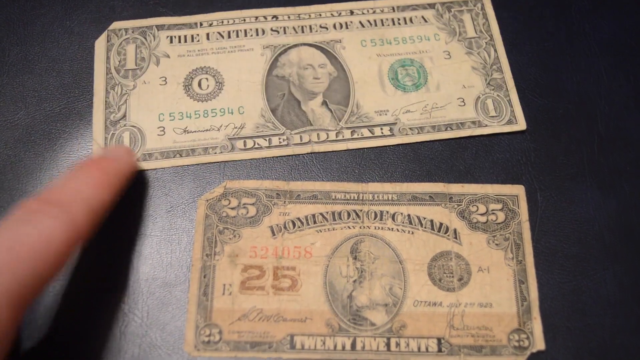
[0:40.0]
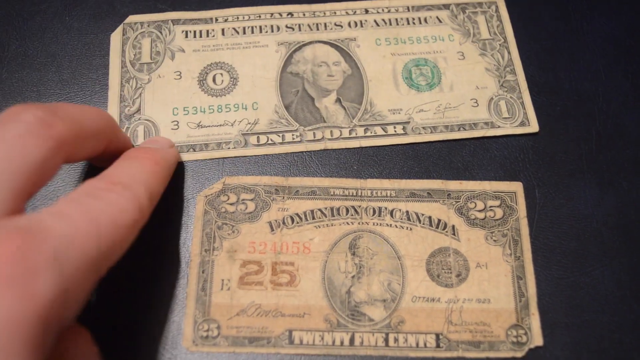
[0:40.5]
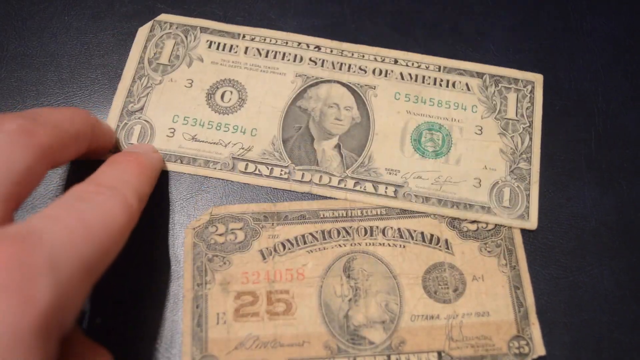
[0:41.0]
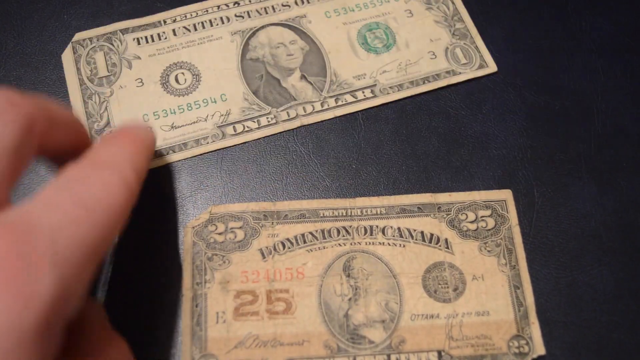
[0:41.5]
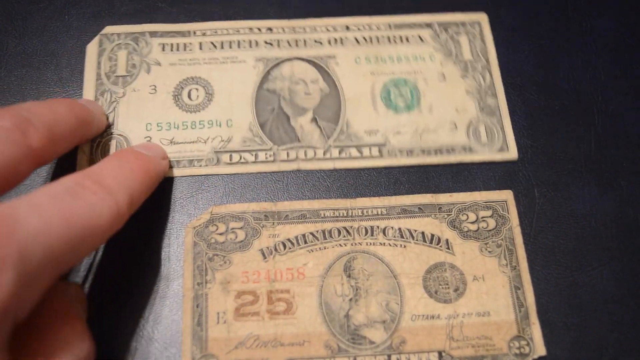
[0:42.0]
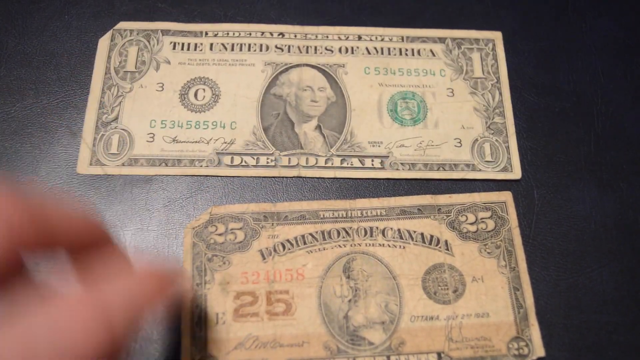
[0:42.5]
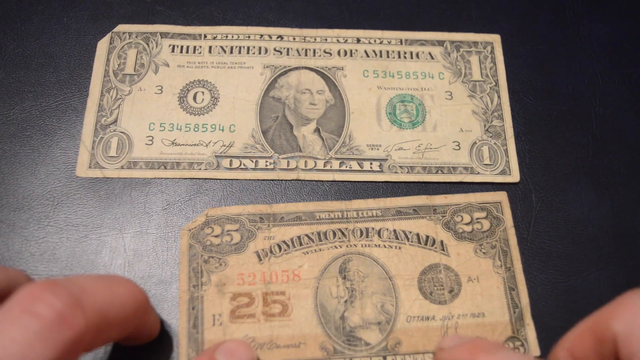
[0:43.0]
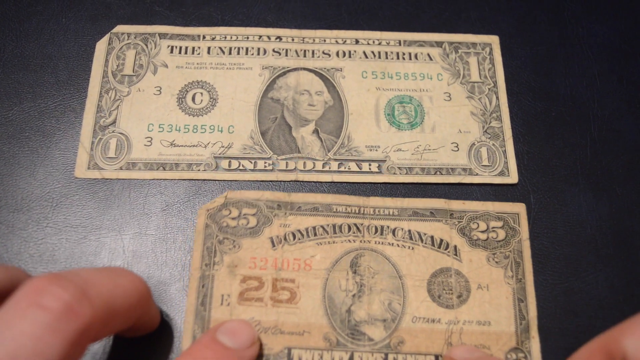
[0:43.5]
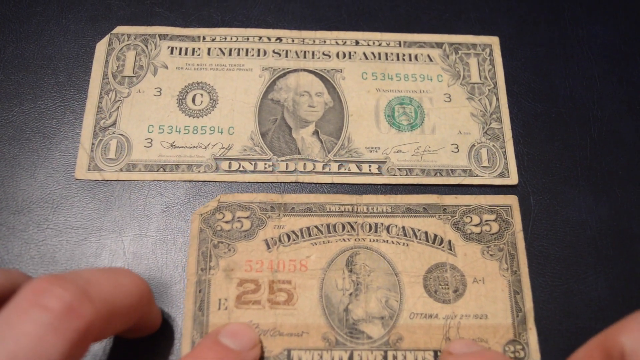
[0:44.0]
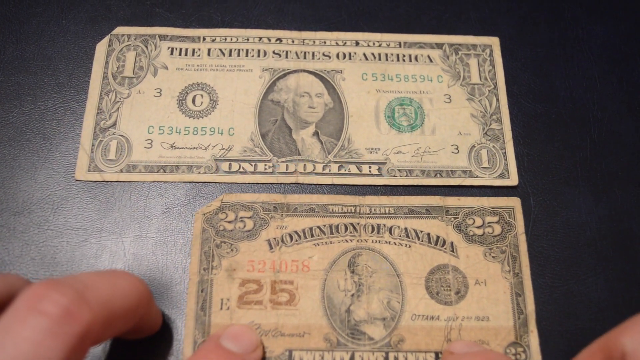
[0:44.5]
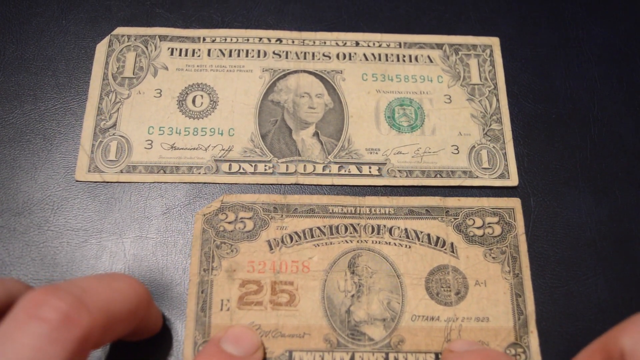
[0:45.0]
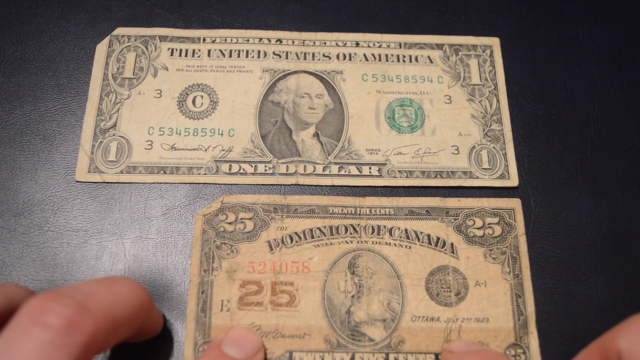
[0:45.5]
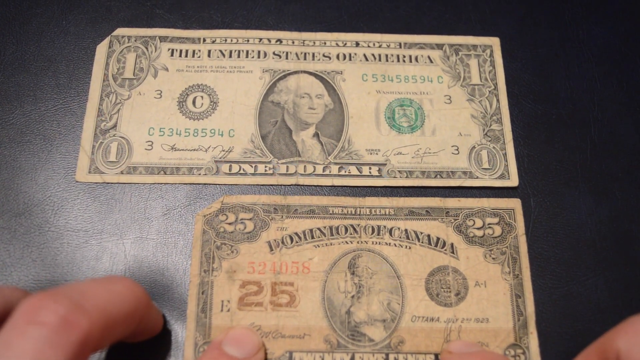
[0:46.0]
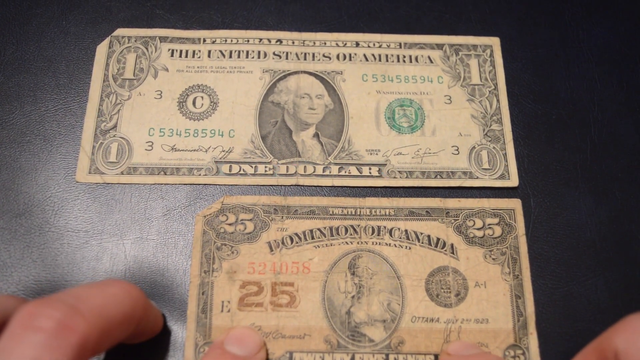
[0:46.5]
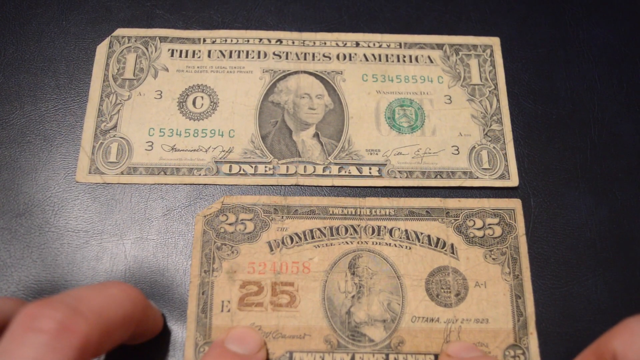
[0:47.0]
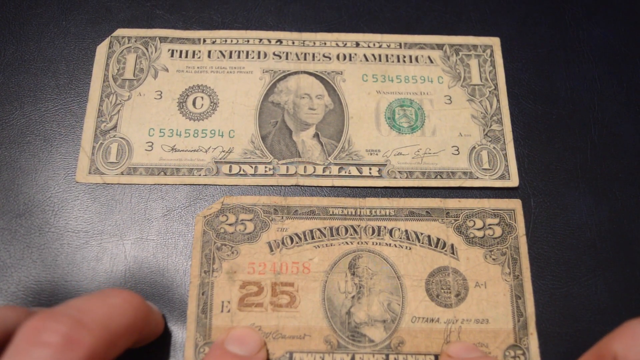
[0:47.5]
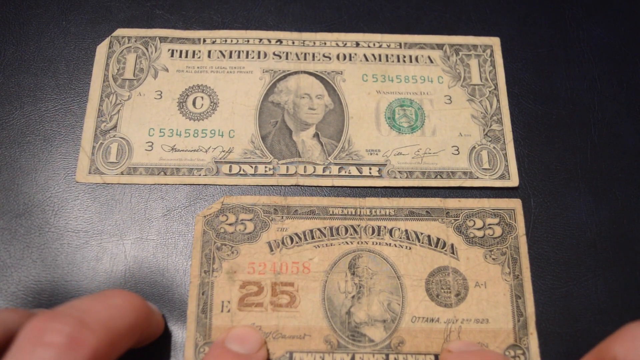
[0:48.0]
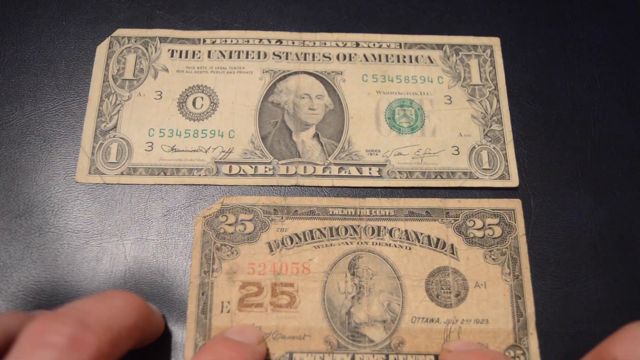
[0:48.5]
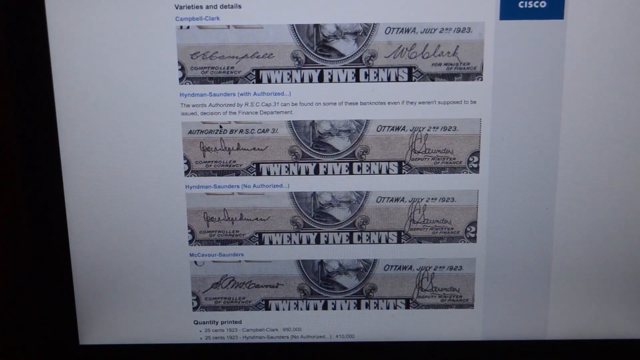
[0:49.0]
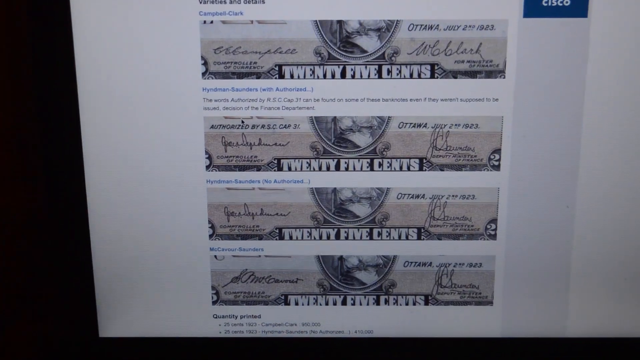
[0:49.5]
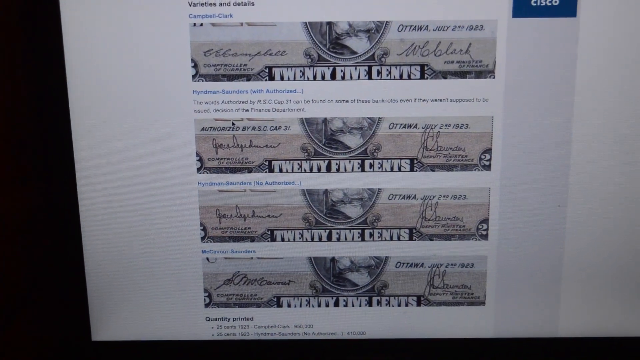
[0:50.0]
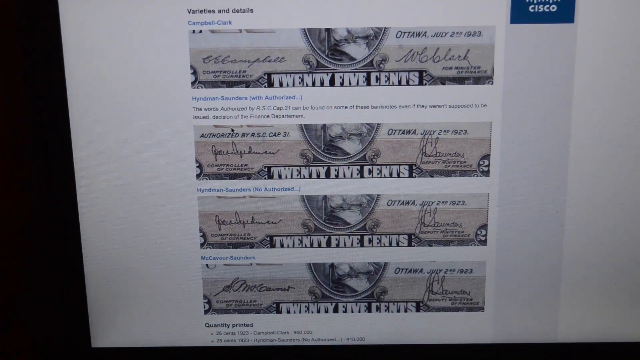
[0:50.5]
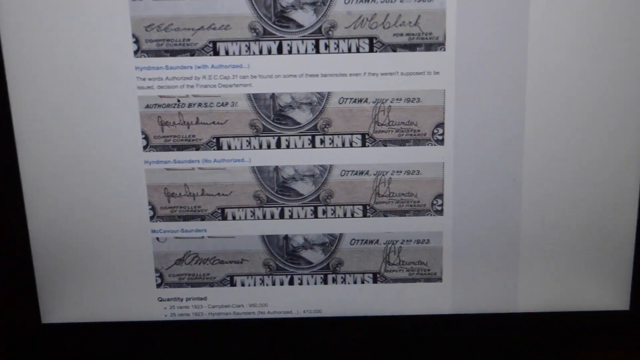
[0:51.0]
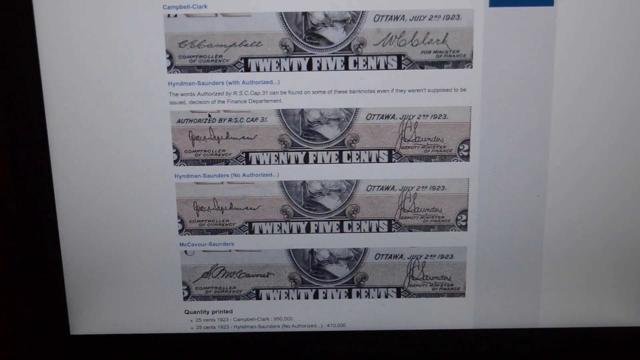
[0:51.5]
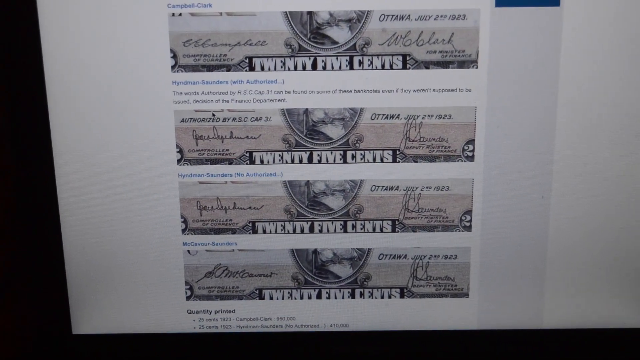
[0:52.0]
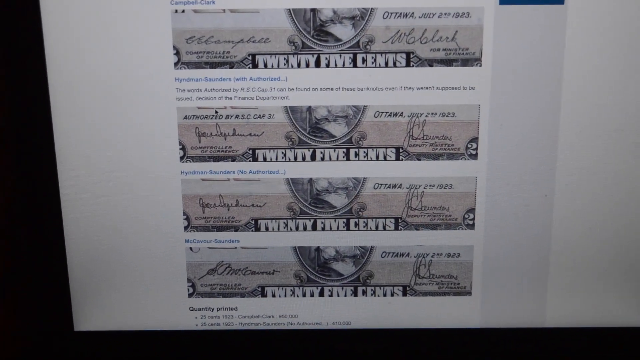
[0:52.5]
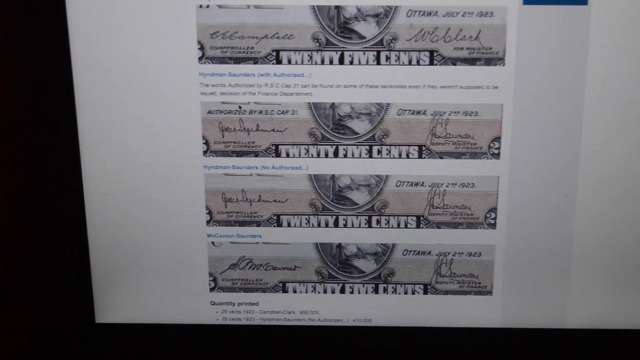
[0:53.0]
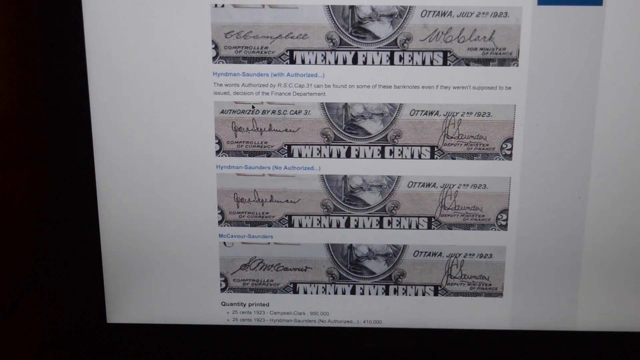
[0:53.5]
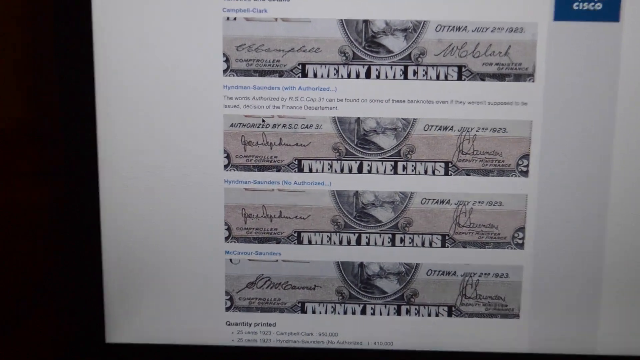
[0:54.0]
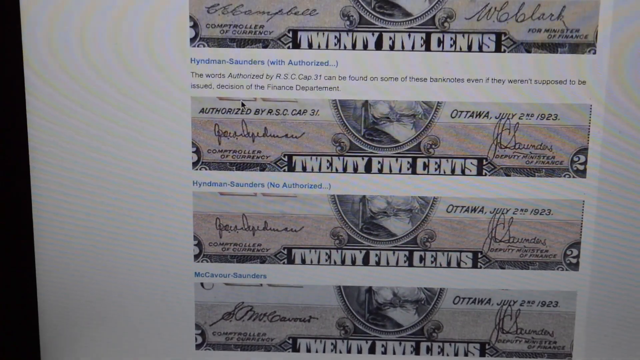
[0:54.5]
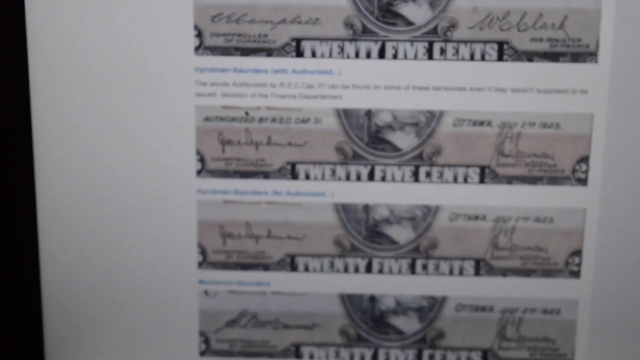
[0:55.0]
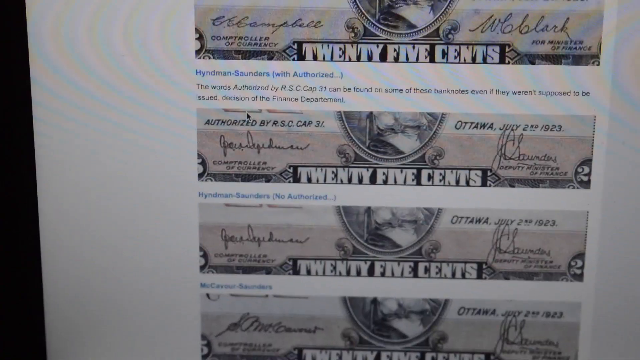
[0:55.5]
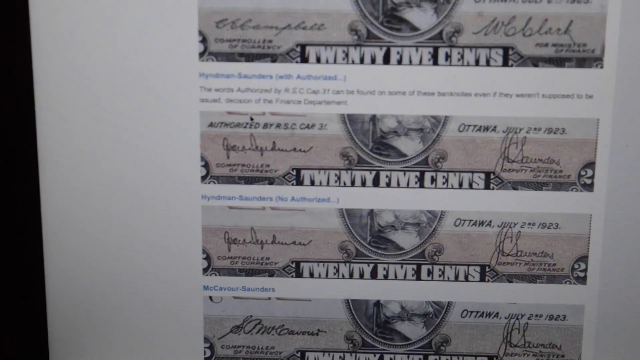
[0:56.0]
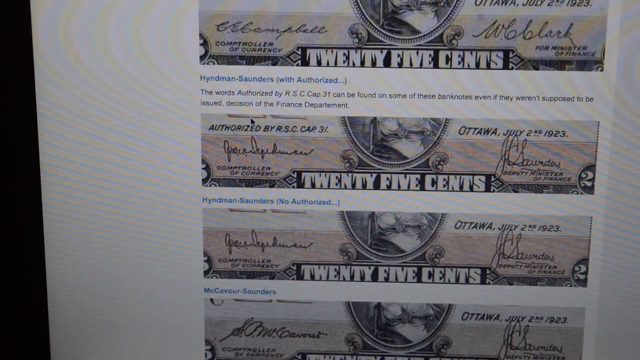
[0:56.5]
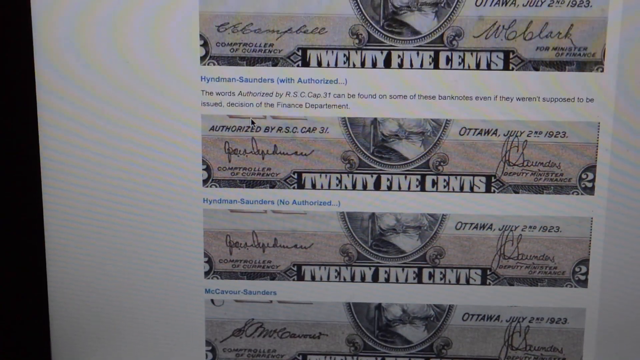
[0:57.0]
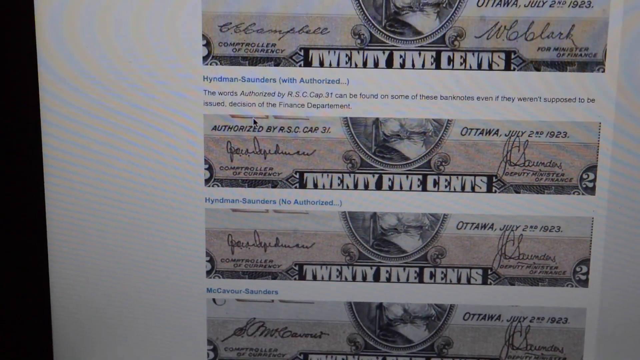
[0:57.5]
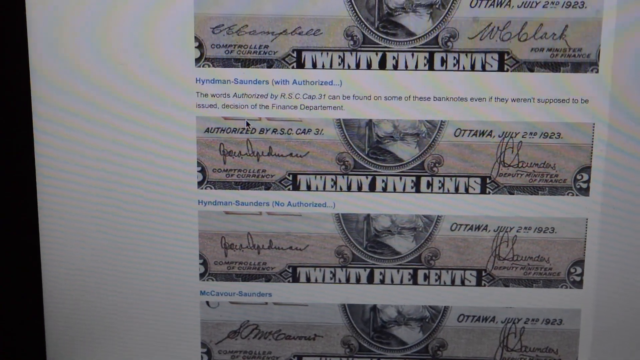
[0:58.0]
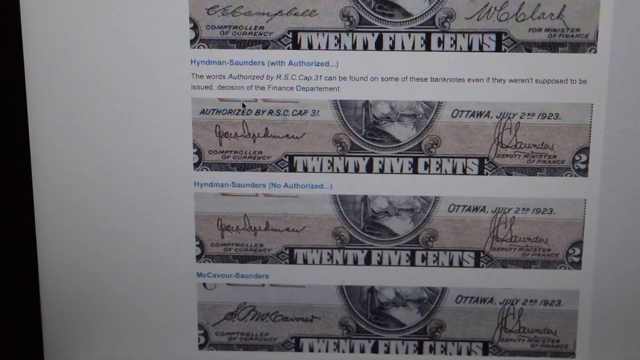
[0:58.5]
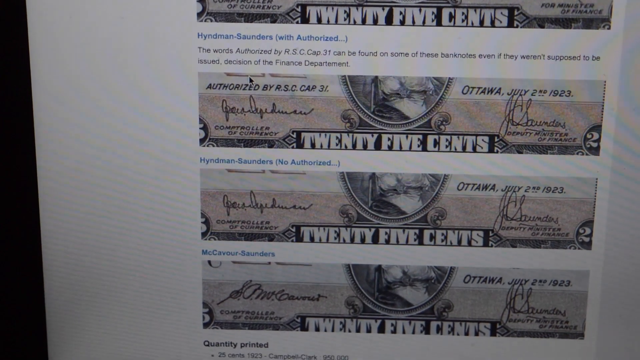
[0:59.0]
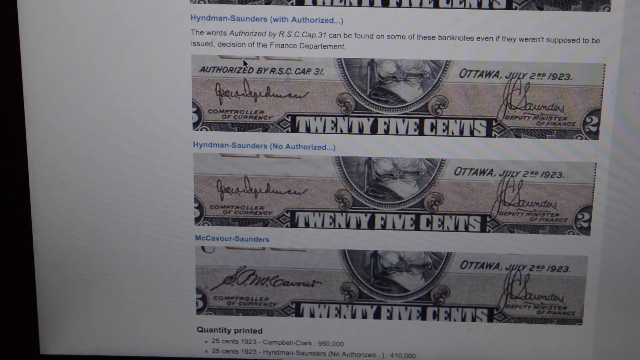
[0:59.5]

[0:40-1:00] The same Dominion of Canada bill is on screen together with a United States dollar bill, which is placed slightly above it. The man shows the two bills. The dollar bill has George Washington's photo directly in the middle of the front and says "$1." The Canadian bill has a woman on the front holding a pitchfork, facing completely in one direction. He then puts up four copies of the Canadian bill on paper, which say "25 cents."